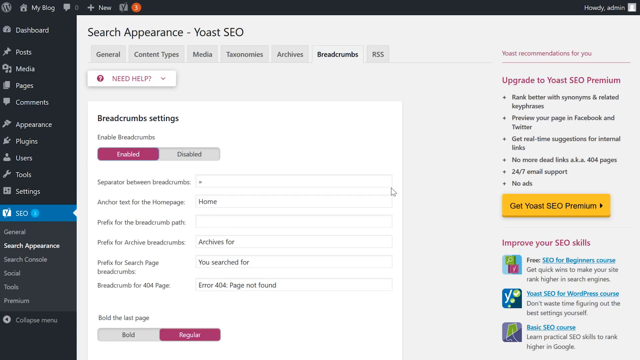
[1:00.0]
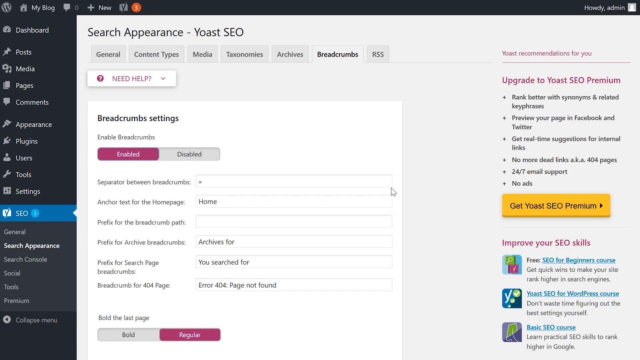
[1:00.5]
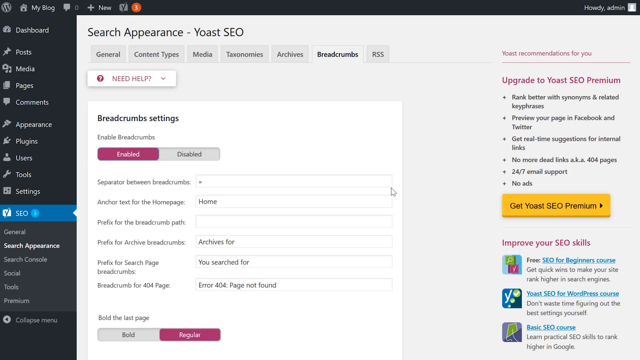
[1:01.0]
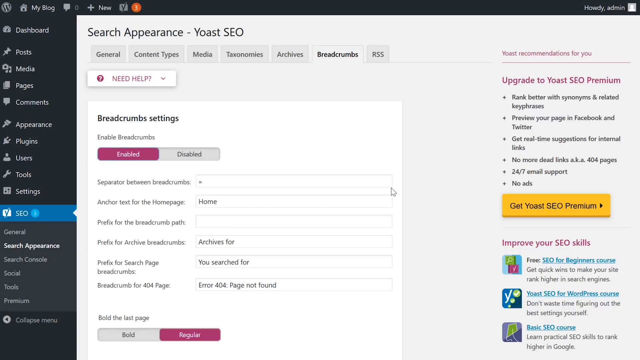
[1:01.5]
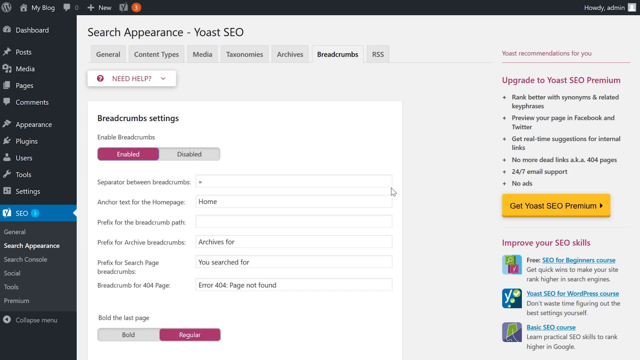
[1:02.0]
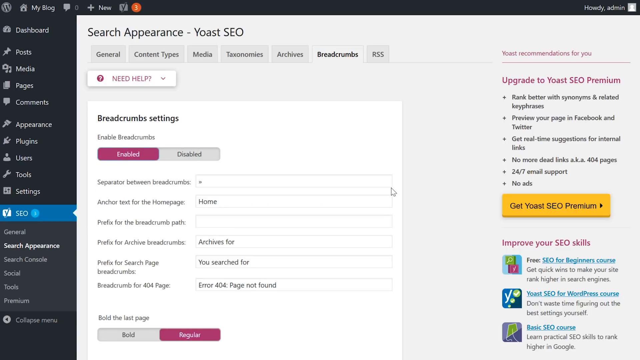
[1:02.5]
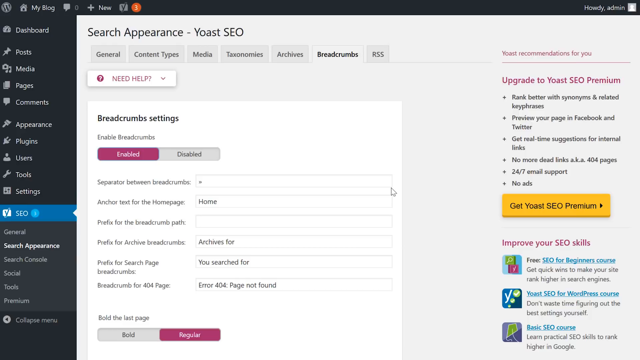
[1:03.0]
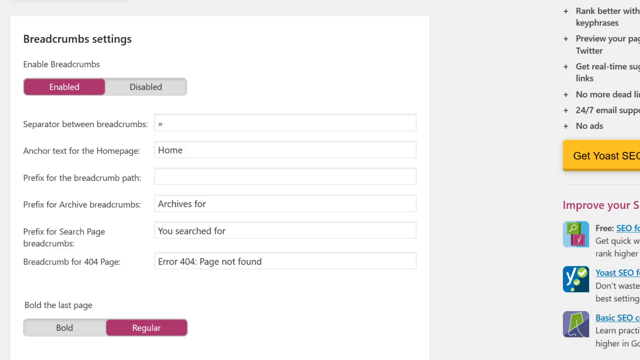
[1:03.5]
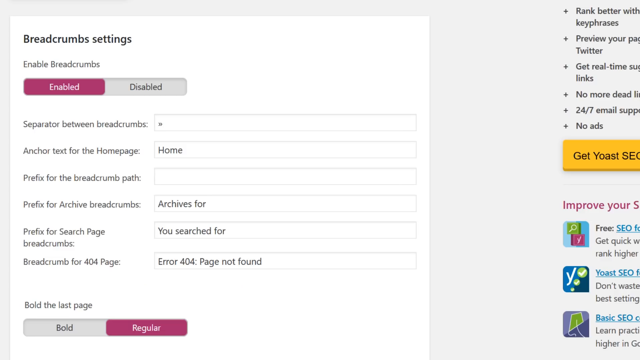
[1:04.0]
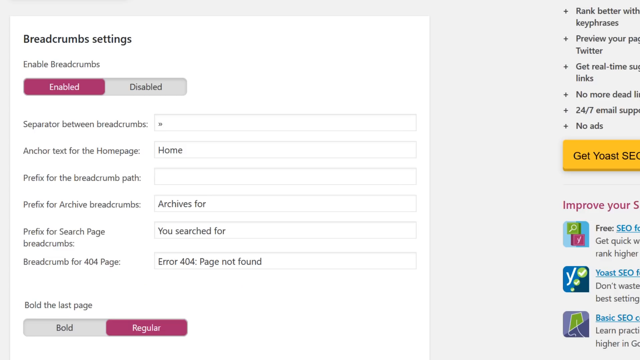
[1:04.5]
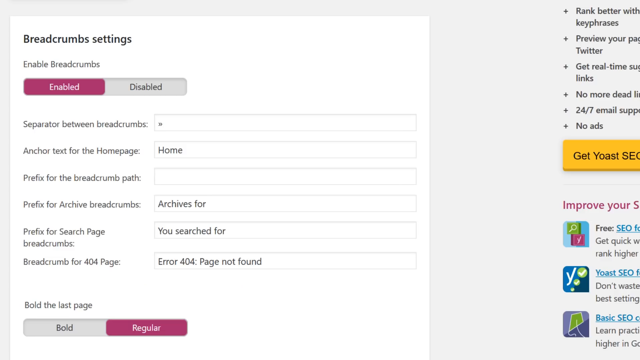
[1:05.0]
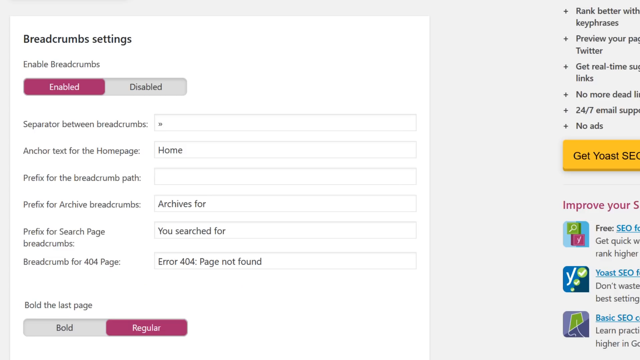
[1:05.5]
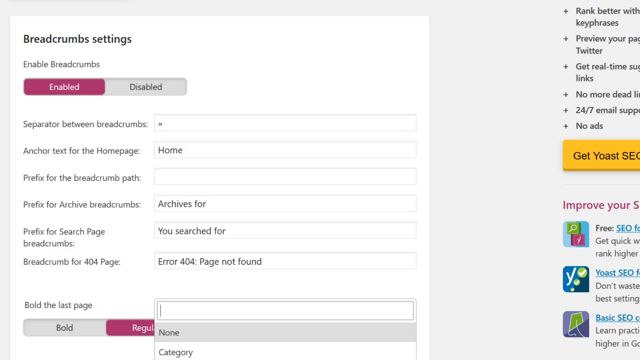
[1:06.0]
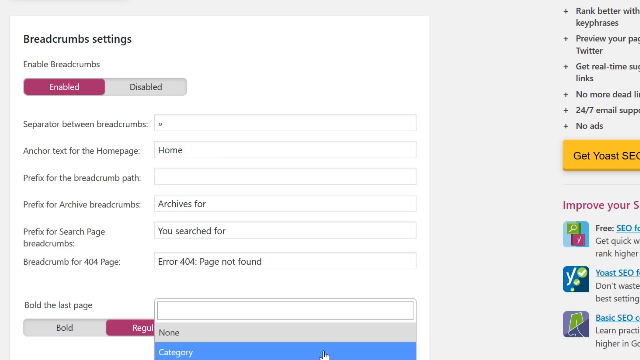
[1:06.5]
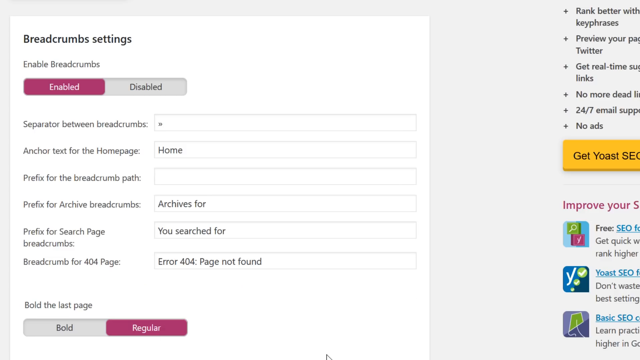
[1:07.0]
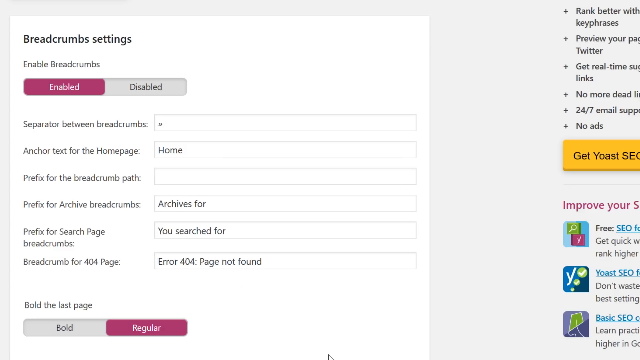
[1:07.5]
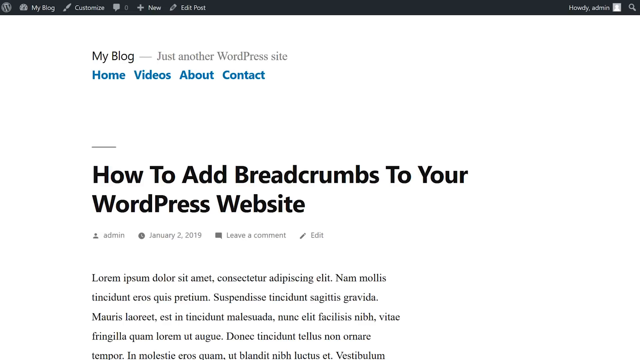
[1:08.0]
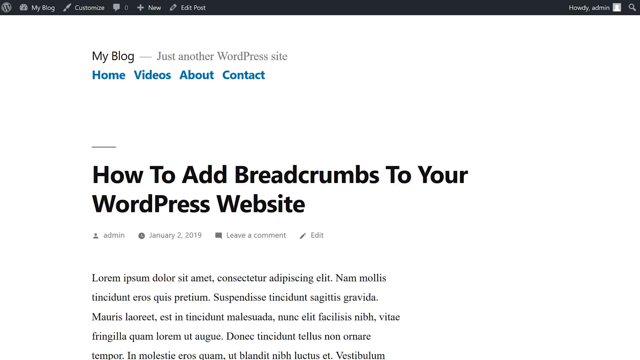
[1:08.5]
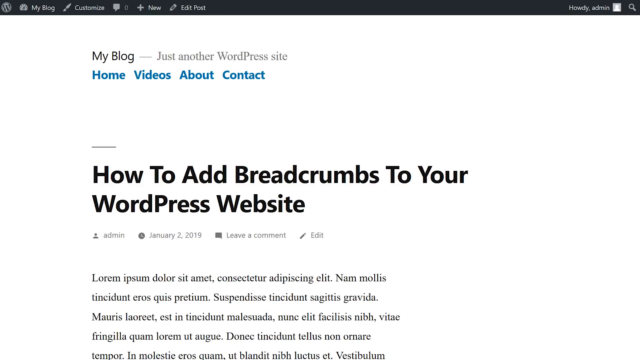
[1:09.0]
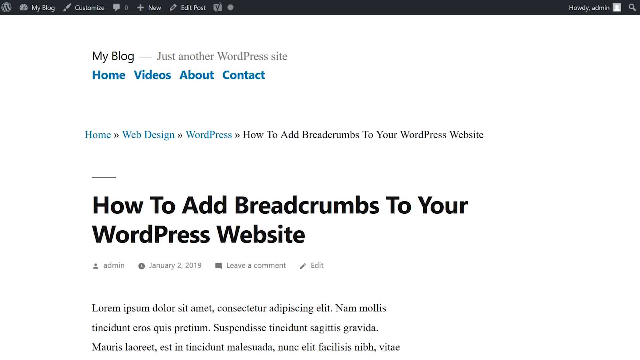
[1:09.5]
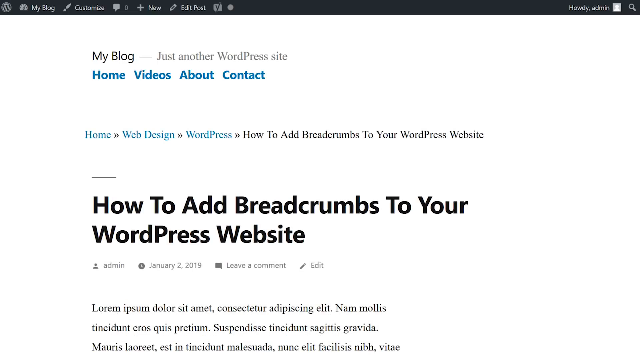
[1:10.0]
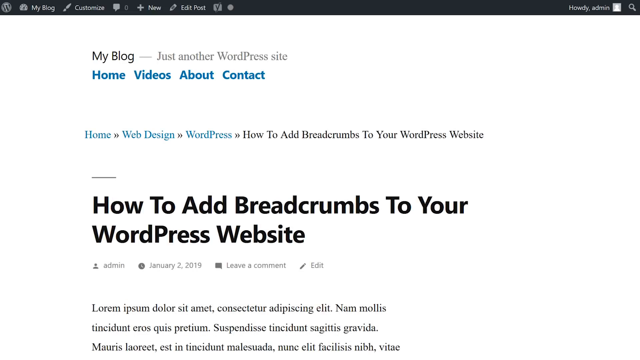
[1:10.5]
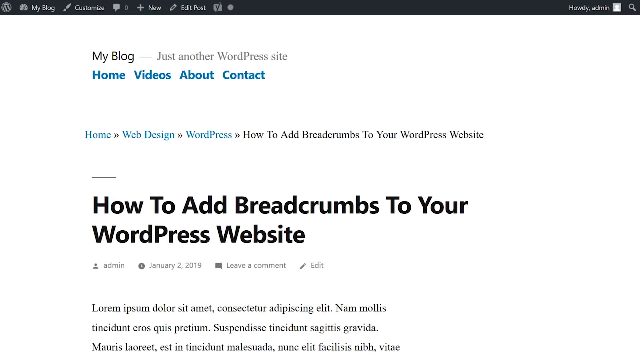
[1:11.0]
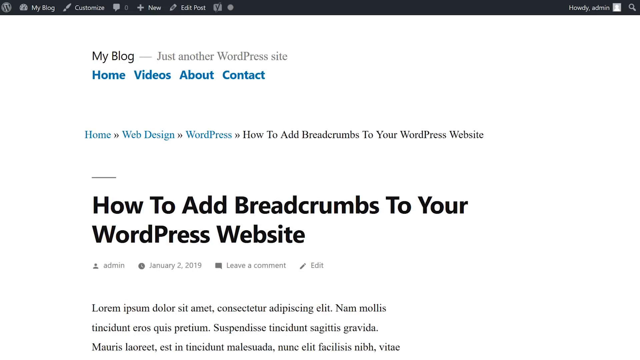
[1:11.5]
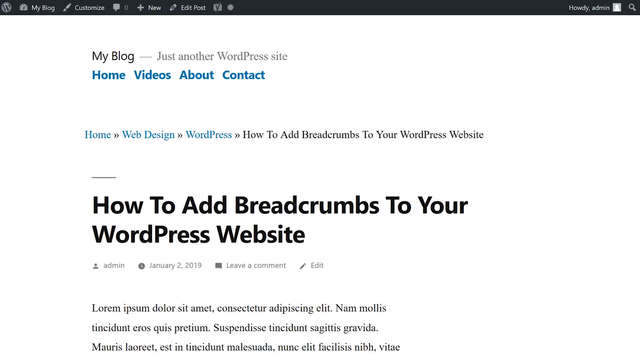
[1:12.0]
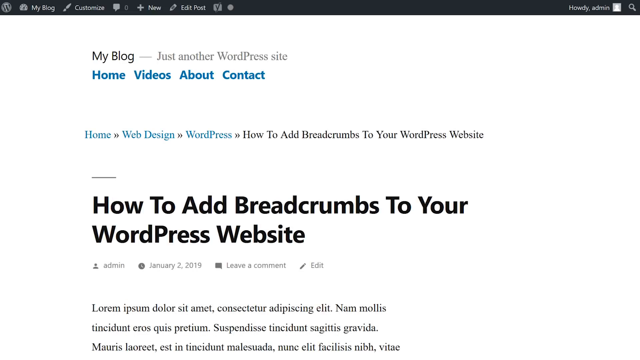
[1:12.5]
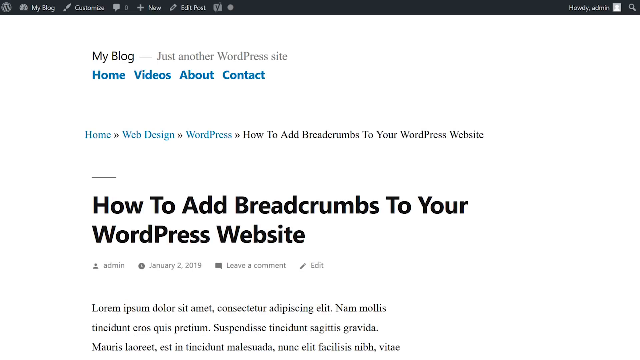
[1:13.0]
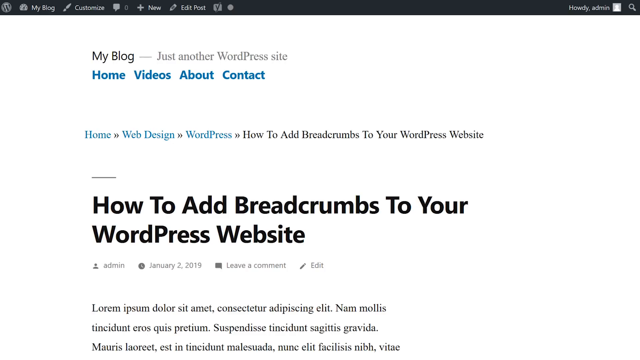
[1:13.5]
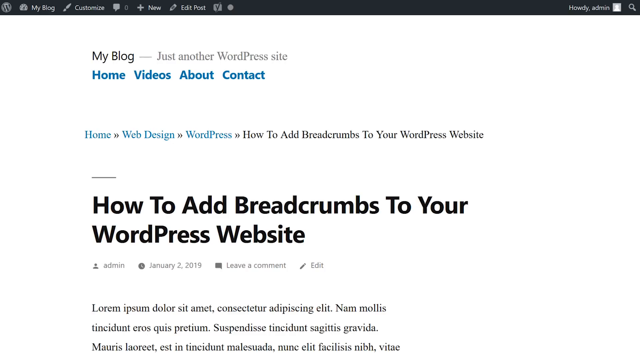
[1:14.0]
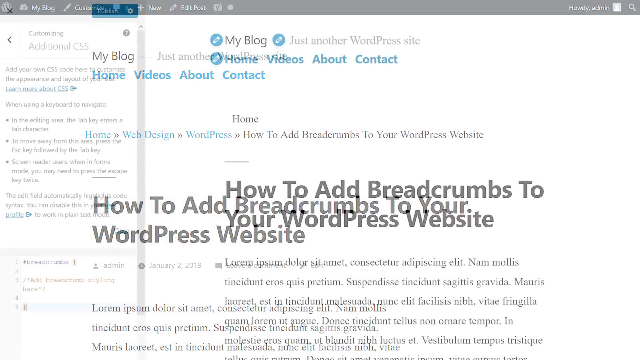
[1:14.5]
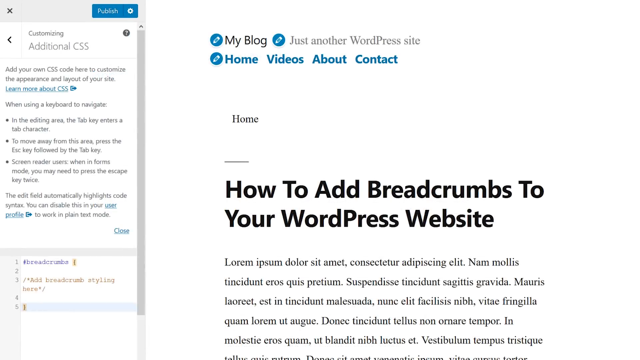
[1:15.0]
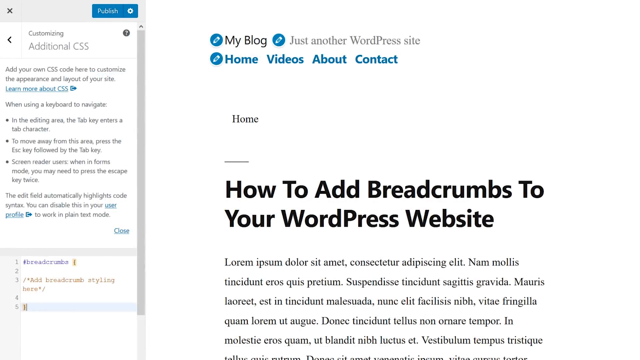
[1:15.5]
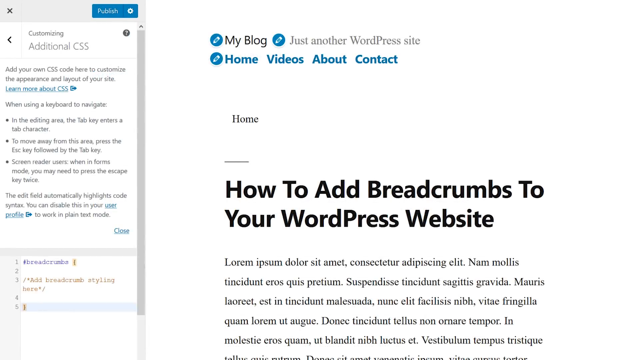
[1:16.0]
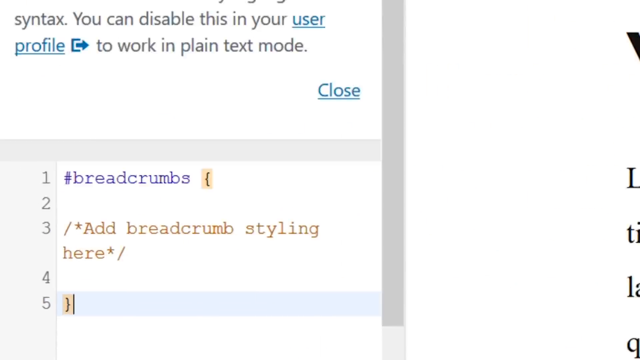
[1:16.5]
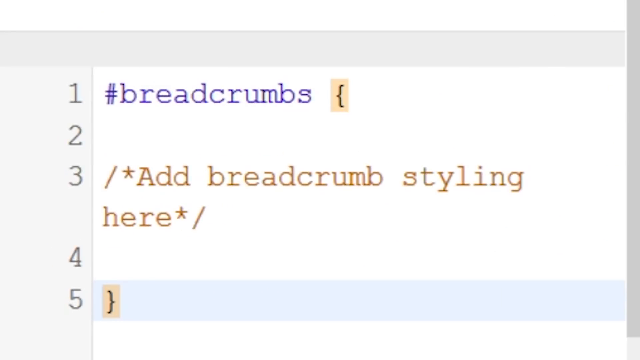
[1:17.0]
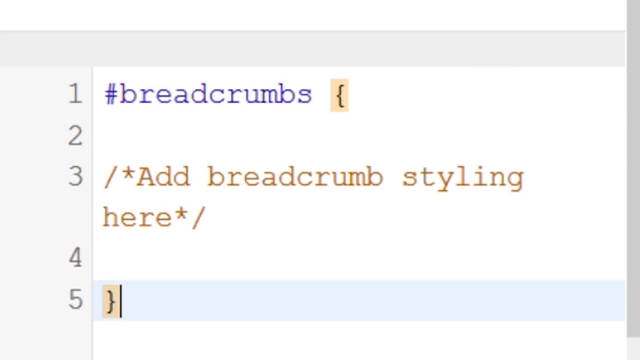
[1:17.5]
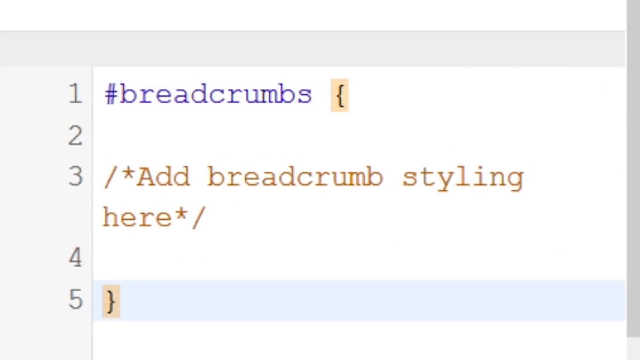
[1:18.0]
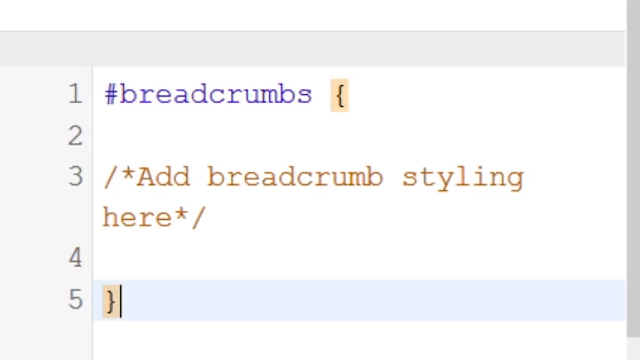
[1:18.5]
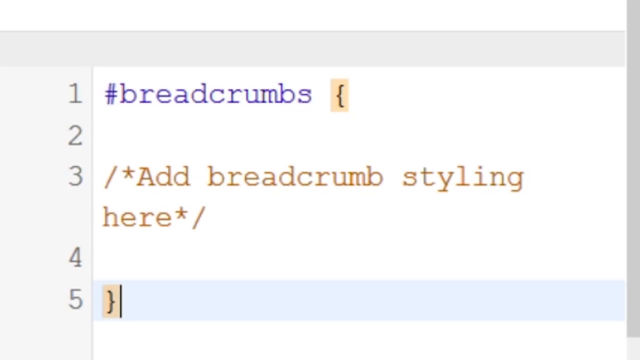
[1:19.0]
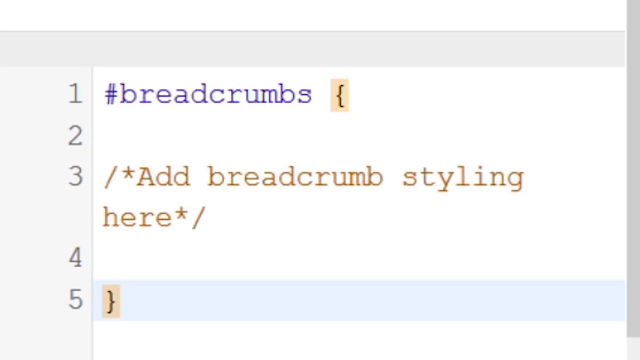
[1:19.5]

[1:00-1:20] The video zooms in on the breadcrumb settings, focusing on the settings under the enable breadcrumb setting, where different options are lined up. An options bar pops up at the bottom middle of the screen, and the user clicks on category. The screen then goes to another part of the WordPress page named My Blog, which shows a bold title that says "How to add breadcrumbs to your WordPress website". Once it loads, the title moves lower on the page as another bar appears at the top showing the path of where the user has been: "home", "web design", "WordPress", "how to add breadcrumbs to your WordPress website". The screen fades to a screen for editing the blog, and the view zooms in on the script at the bottom left.